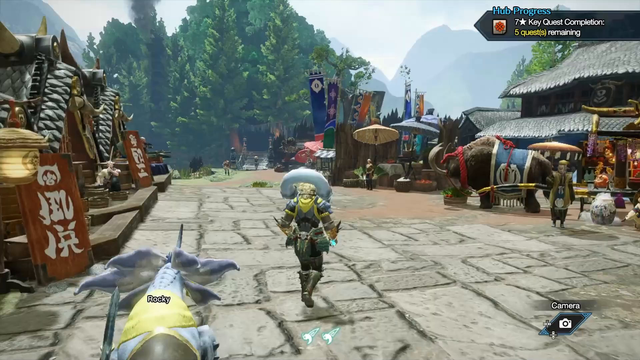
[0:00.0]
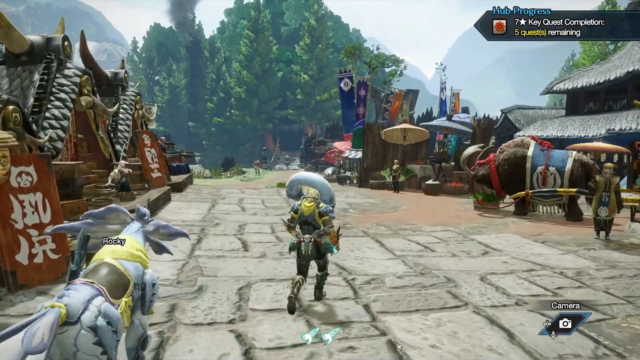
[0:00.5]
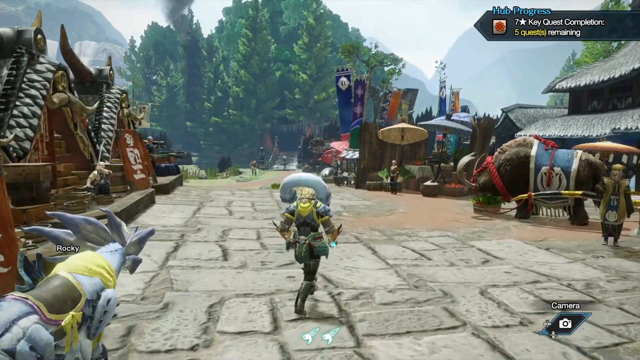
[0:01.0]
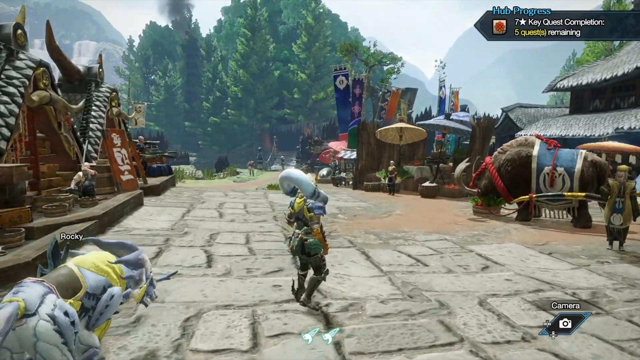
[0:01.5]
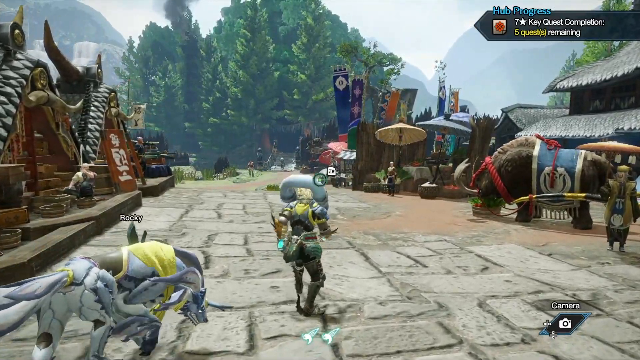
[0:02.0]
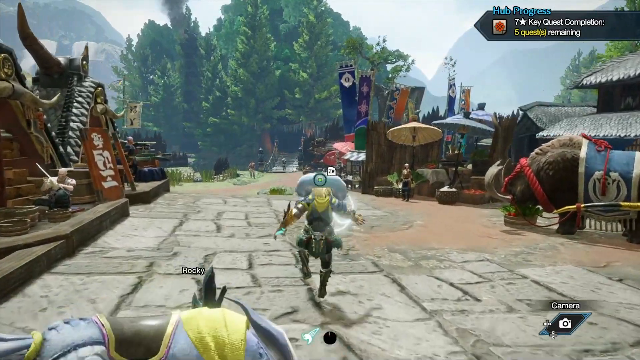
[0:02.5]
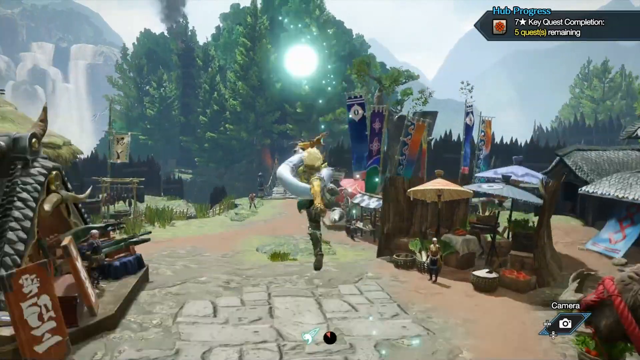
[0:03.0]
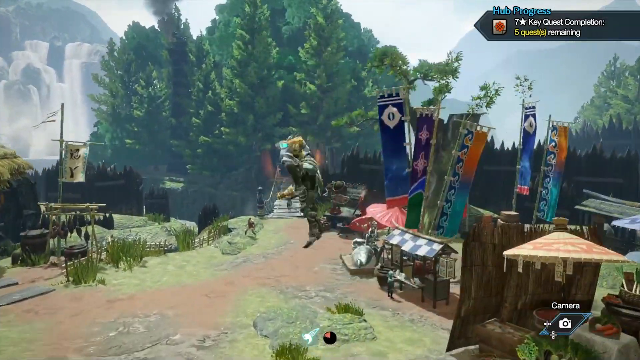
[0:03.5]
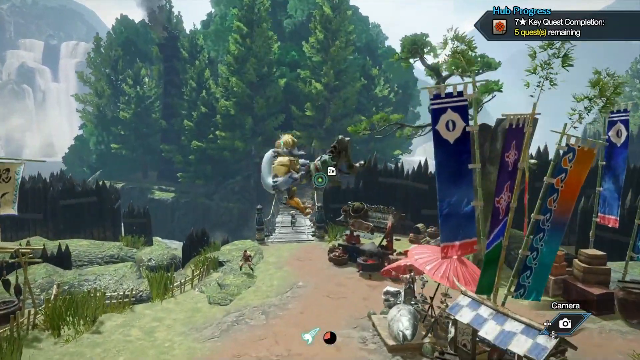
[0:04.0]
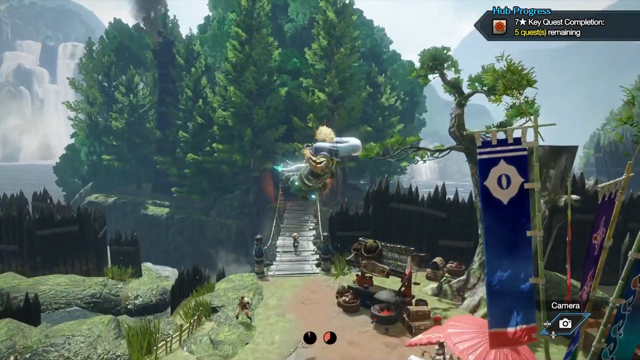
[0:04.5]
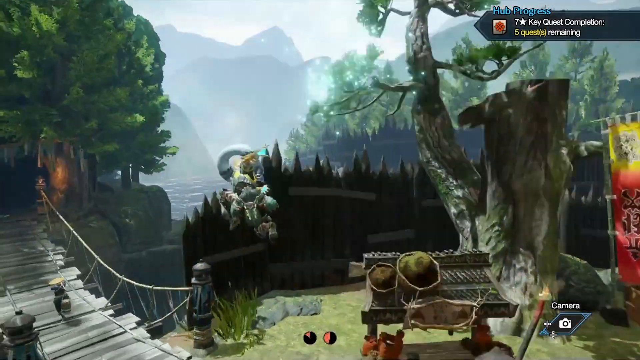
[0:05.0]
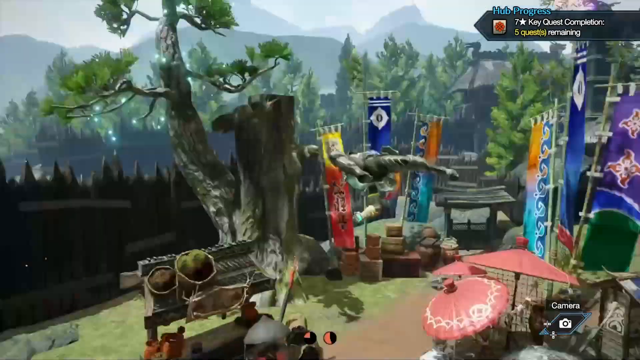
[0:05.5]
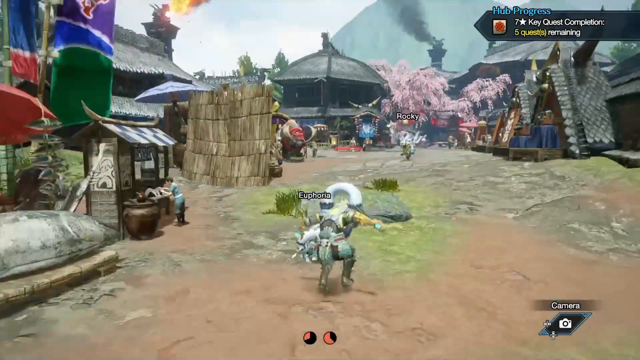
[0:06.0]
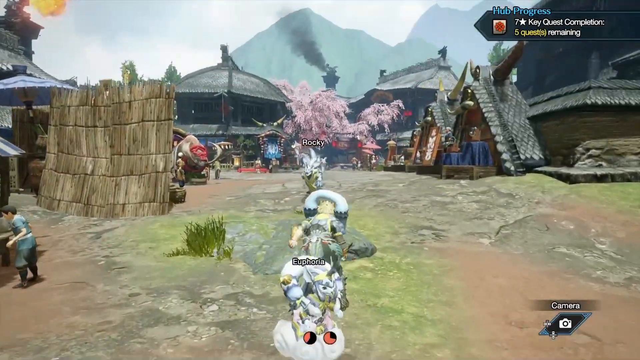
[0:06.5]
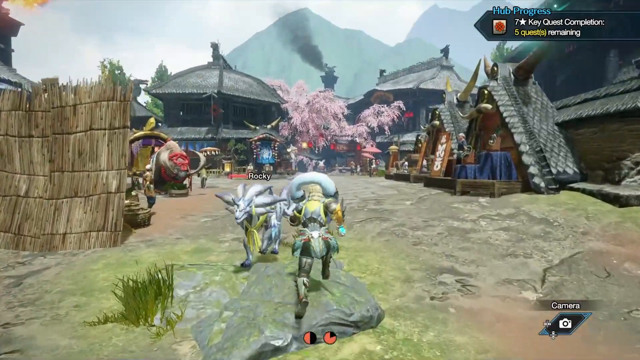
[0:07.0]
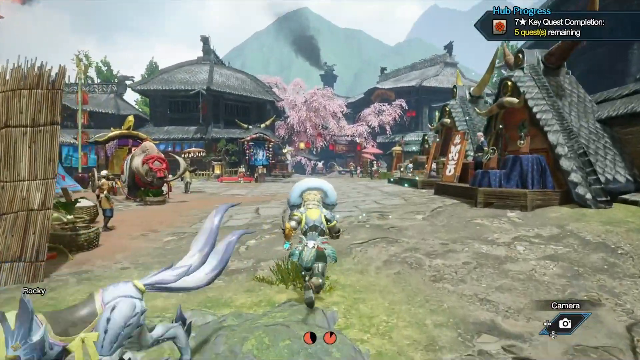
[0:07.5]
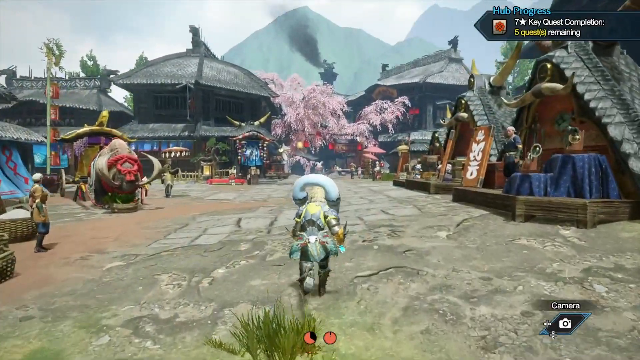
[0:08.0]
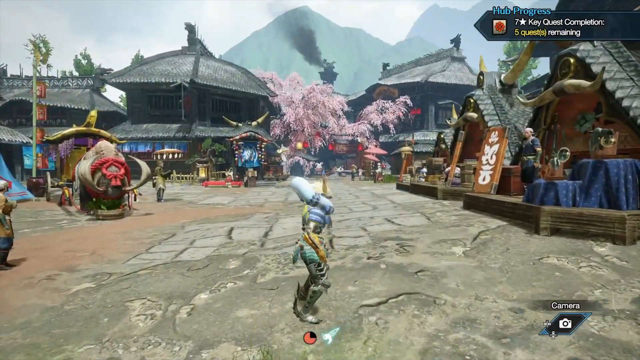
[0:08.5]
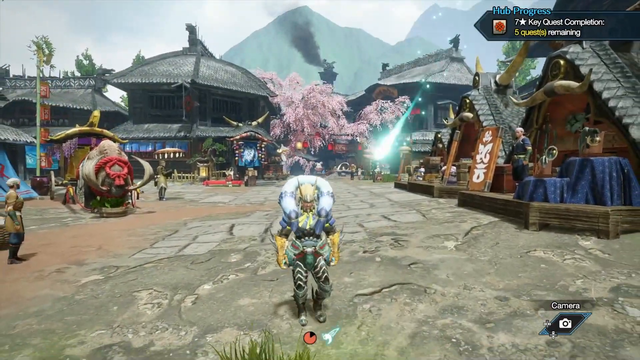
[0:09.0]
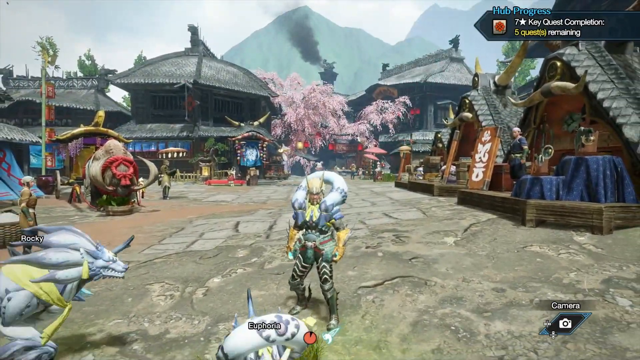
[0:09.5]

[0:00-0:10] What looks like an online role-playing type game opens in a town square type area with markets and tents, and different characters standing on either side. The player character runs down the market area and starts to jump with what looks like a lightning bolt, performing double jumps and different multi jumps strung together with his lightning. He apparently has a companion pet following him, some sort of three-tailed dog or tiger. The character ends the jump; a forest area and a bridge are visible beyond, but the character jumps back and moves back into the town square area. The town is then seen from an alternate view: street merchants, a big building at the end of the road, and cherry blossoms in the middle, with a mountain landscape in the background beyond the main big building.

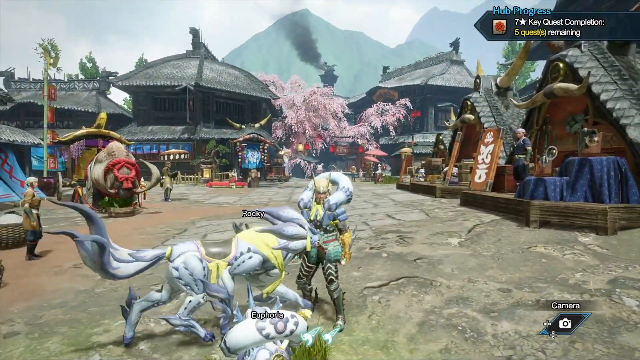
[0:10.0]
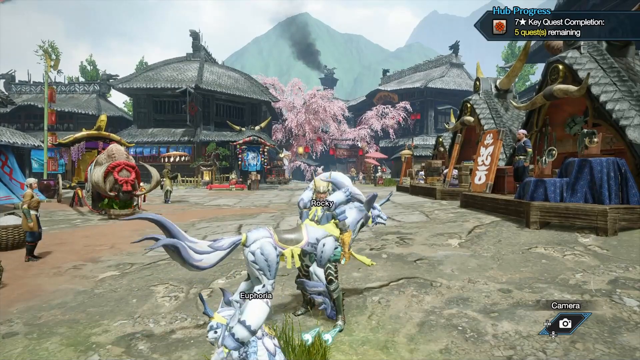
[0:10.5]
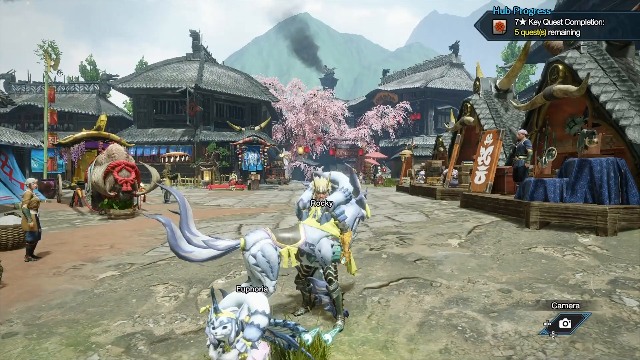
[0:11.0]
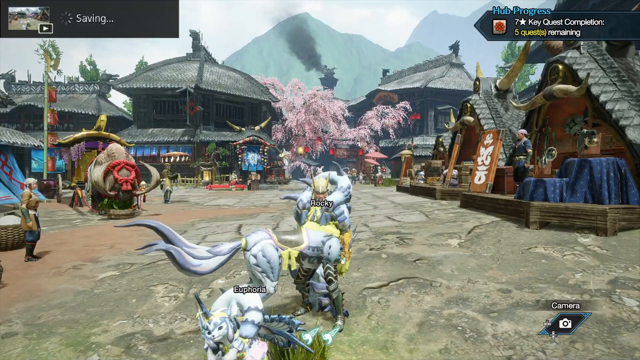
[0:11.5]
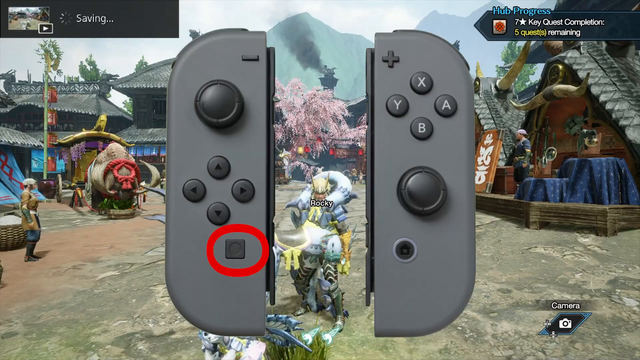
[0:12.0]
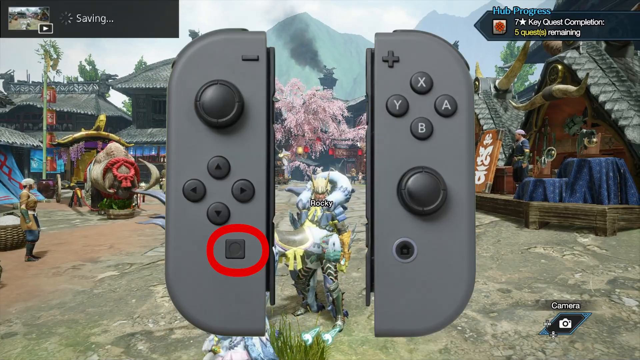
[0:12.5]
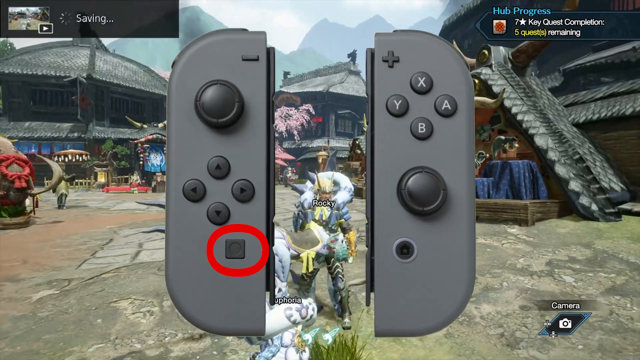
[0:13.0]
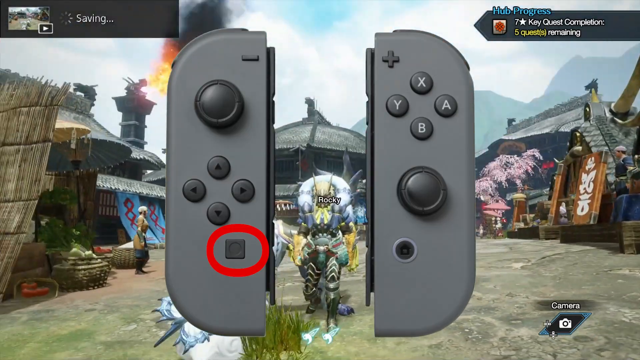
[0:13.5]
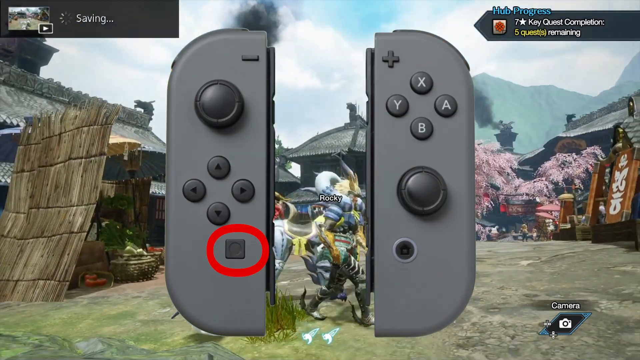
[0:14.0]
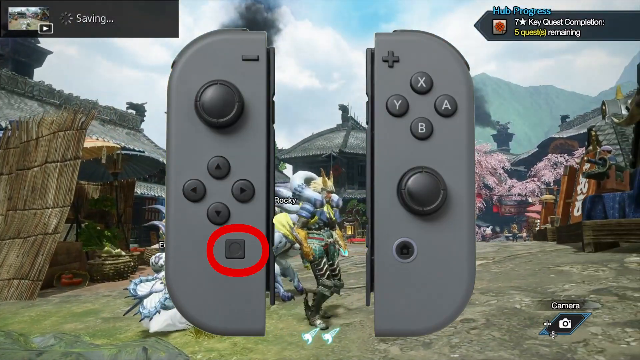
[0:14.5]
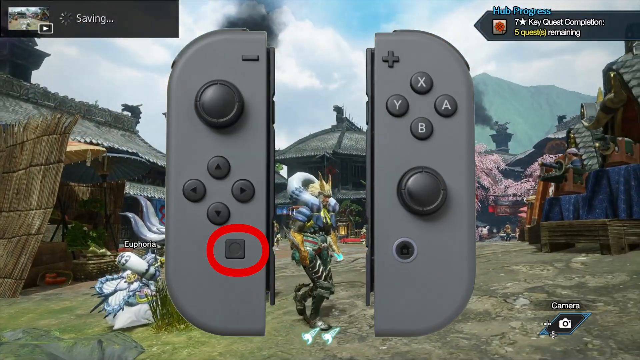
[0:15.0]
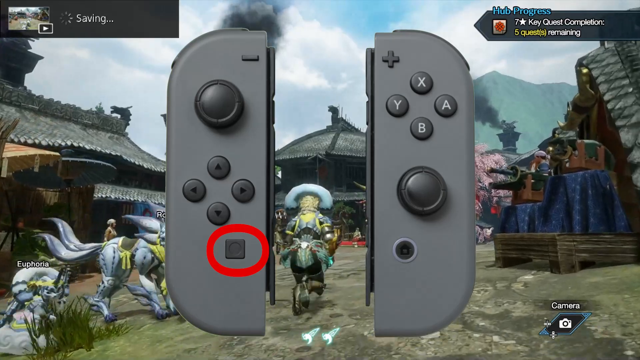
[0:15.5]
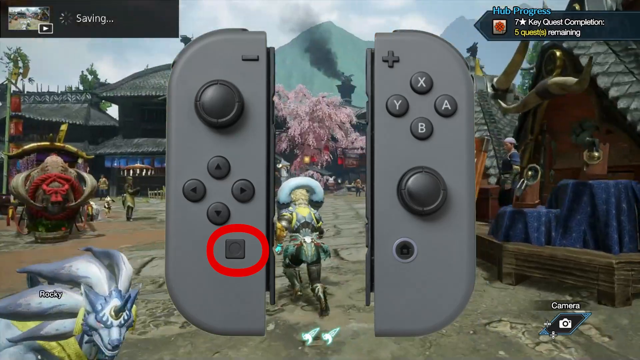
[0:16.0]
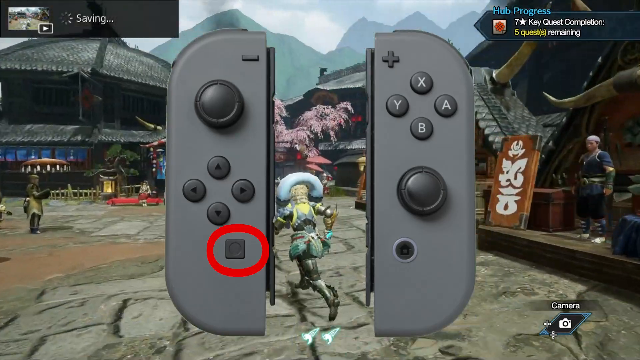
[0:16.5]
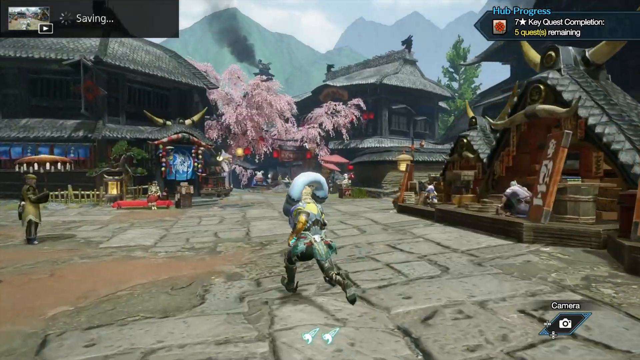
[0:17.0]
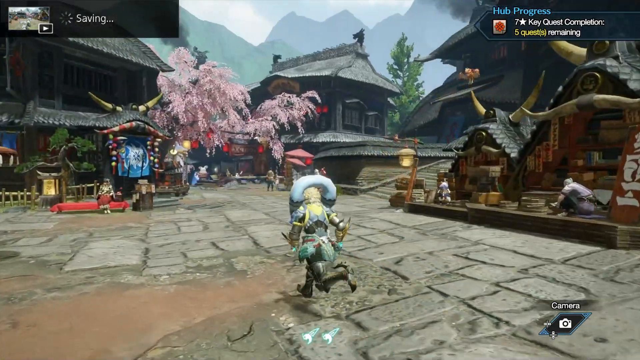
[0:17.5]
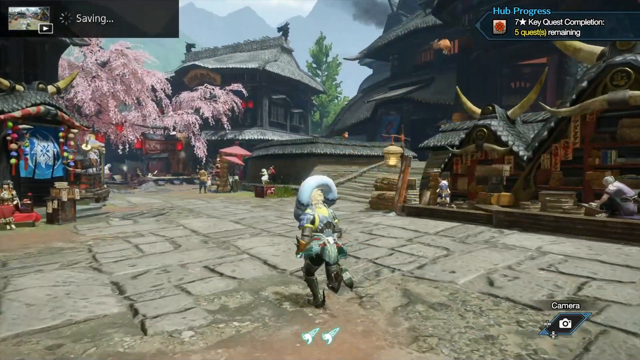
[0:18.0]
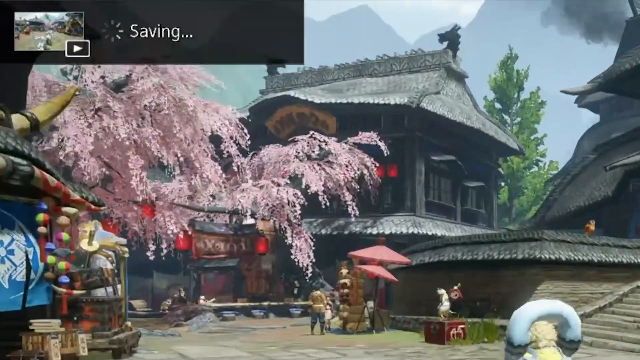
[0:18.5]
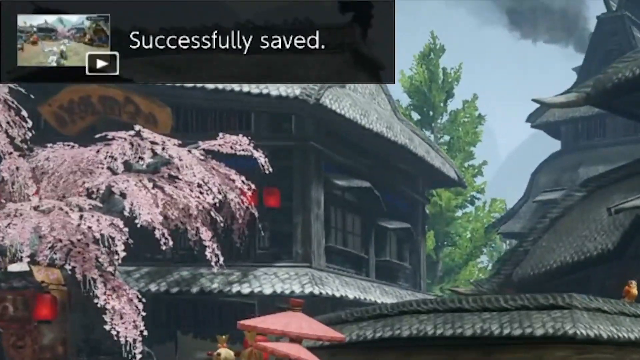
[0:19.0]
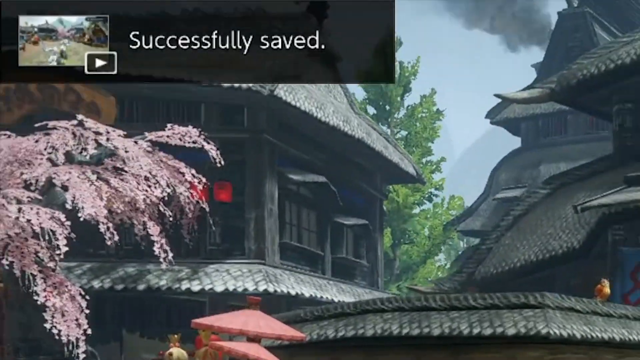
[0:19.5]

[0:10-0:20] The character stands with his pets; he seems to have two pets, as two other animals are standing with him. Images of the Switch joycons, both left and right, pop up onto the screen, with the screenshot button on the left joycon circled. The player is still visible in the background walking around. A pop-up saying "saving" appears in the upper left corner, apparently saving a video clip. The upper right corner shows quest progress reading "hub progress", "7 star key quest completion", "5 quests remaining". The player character runs back towards the big building with the cherry blossoms.